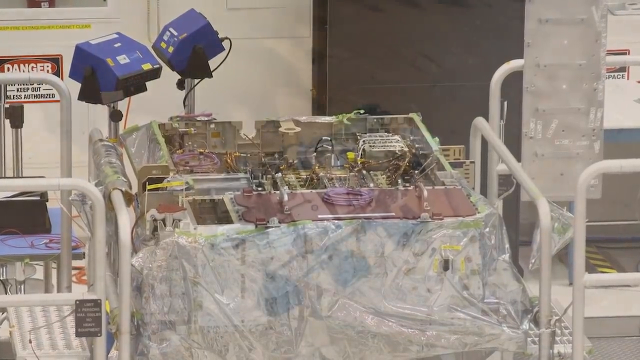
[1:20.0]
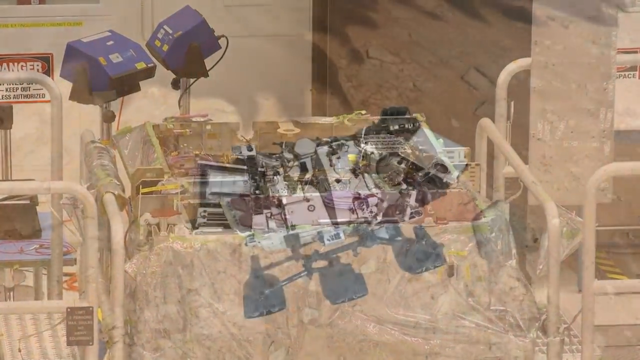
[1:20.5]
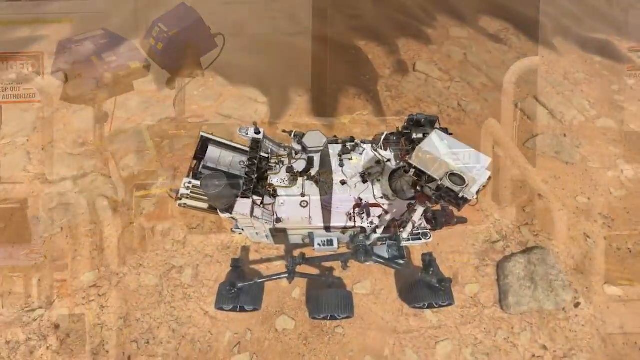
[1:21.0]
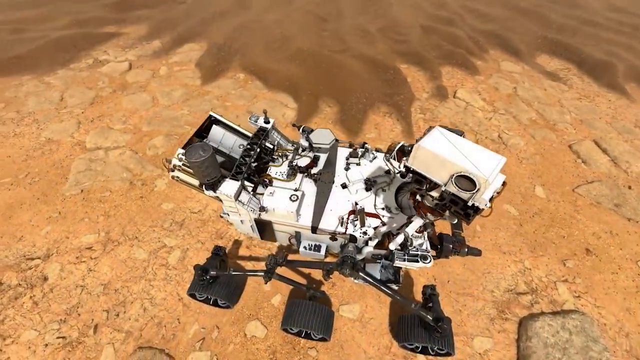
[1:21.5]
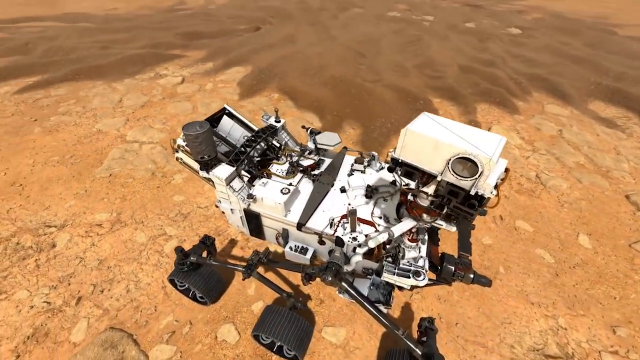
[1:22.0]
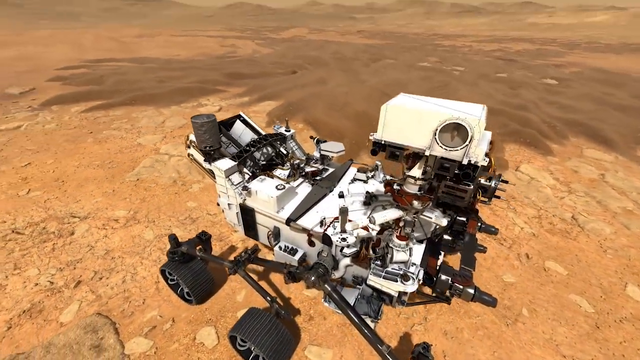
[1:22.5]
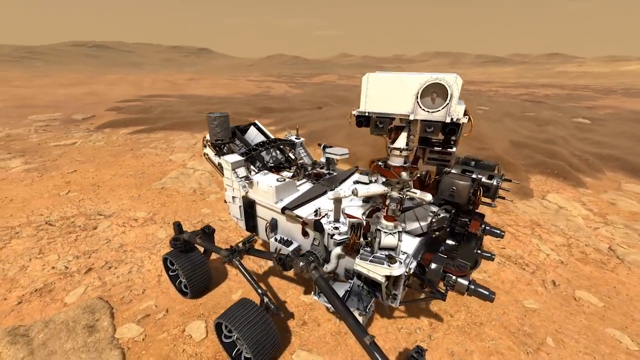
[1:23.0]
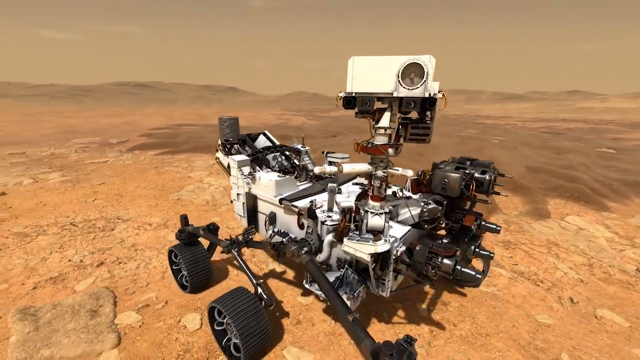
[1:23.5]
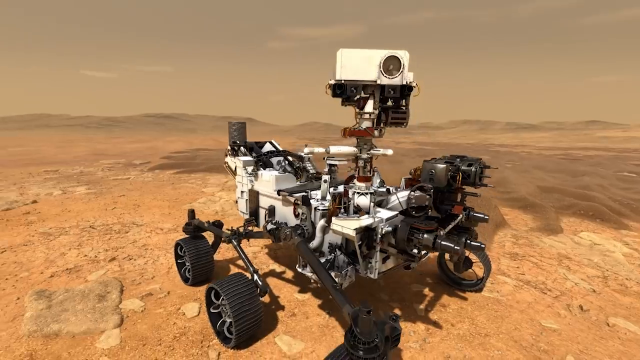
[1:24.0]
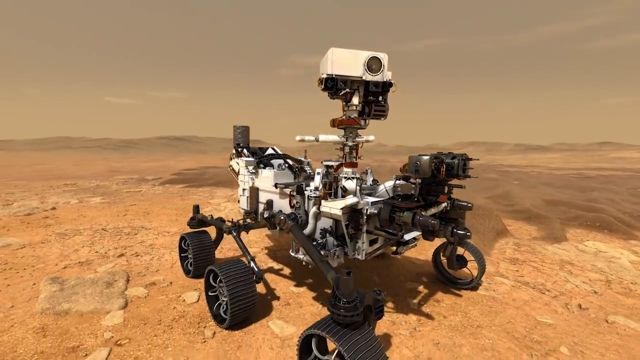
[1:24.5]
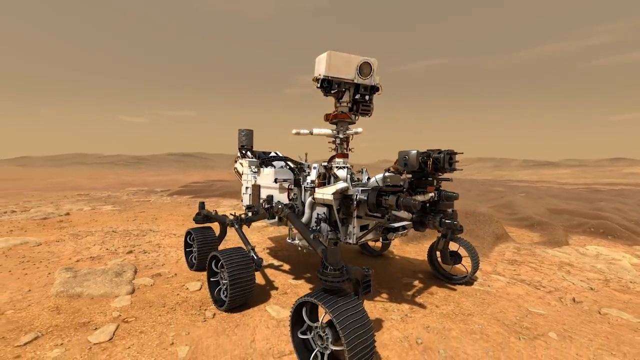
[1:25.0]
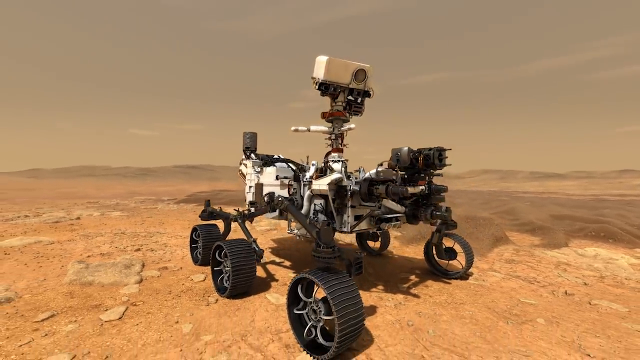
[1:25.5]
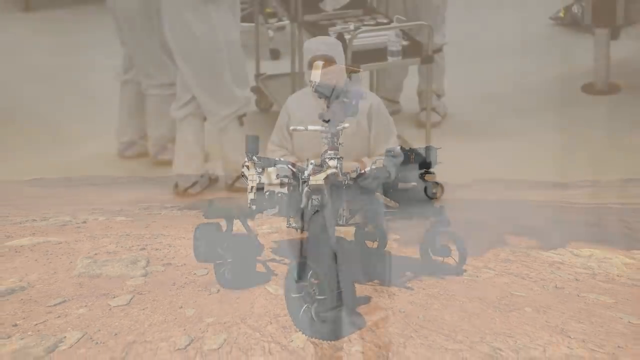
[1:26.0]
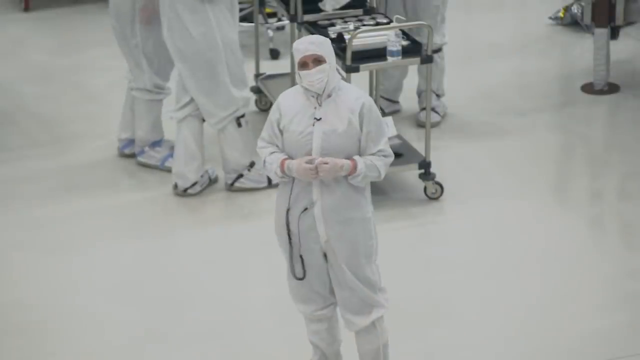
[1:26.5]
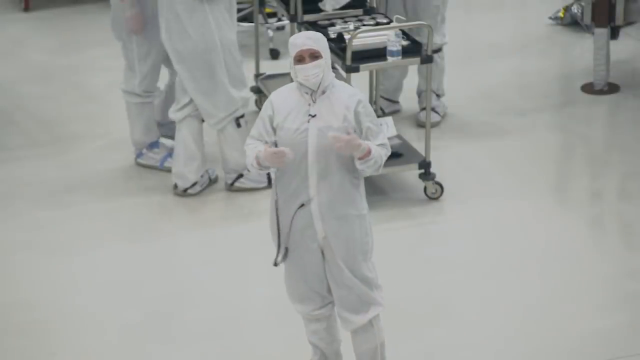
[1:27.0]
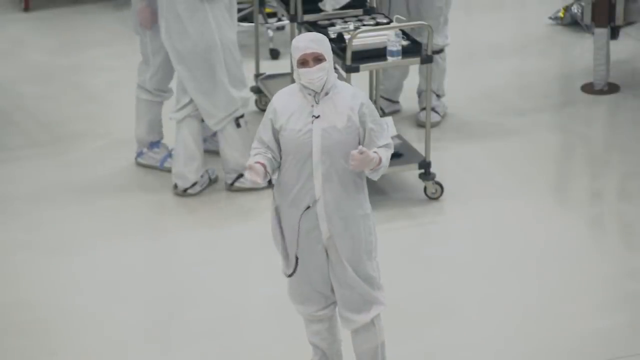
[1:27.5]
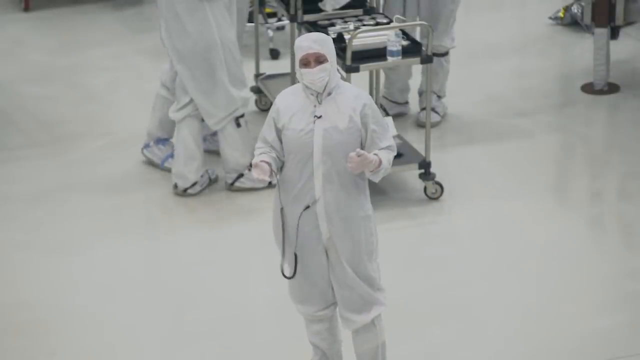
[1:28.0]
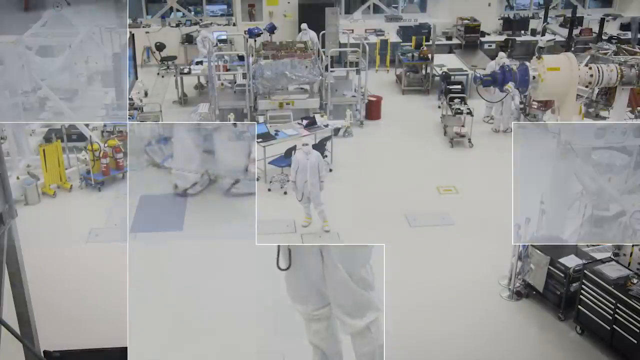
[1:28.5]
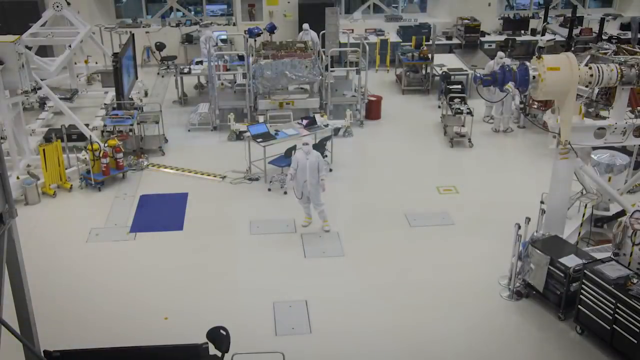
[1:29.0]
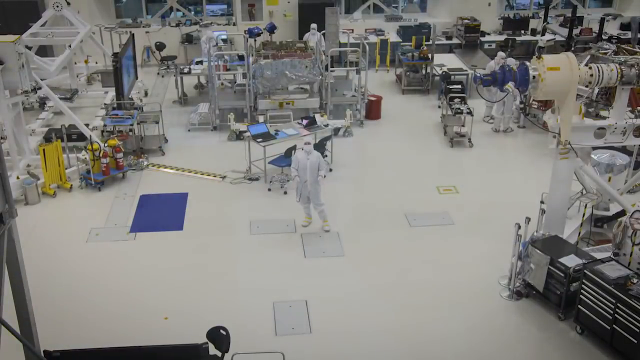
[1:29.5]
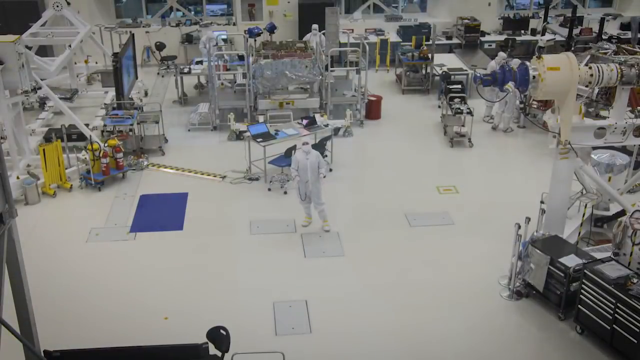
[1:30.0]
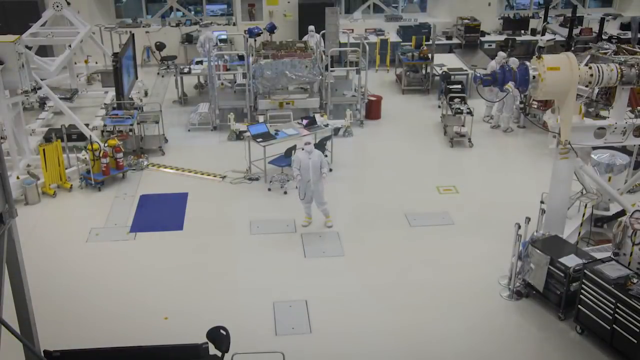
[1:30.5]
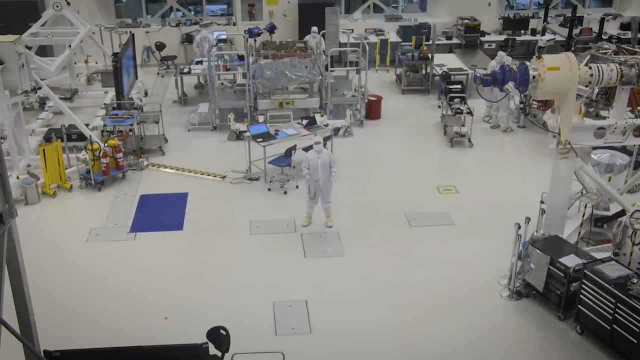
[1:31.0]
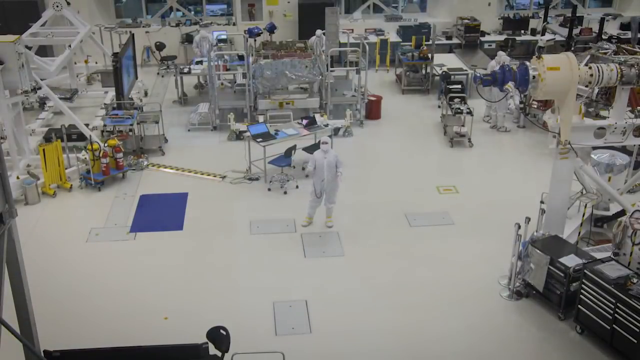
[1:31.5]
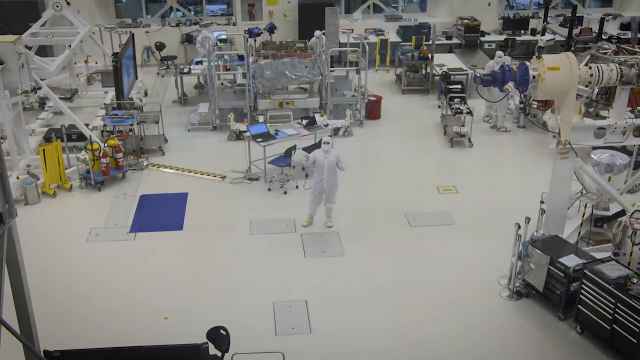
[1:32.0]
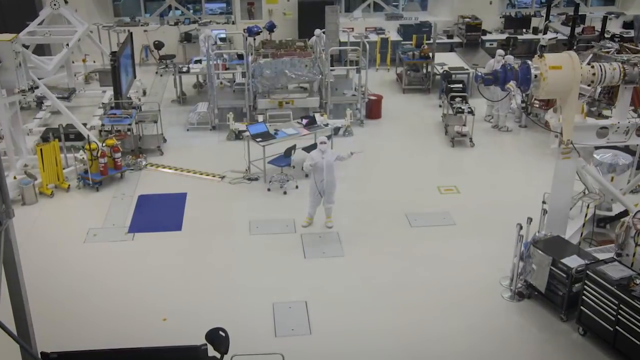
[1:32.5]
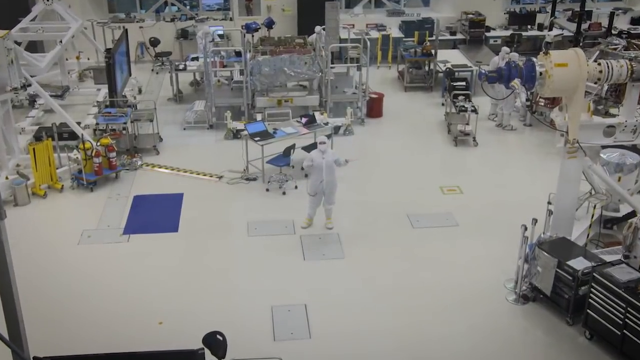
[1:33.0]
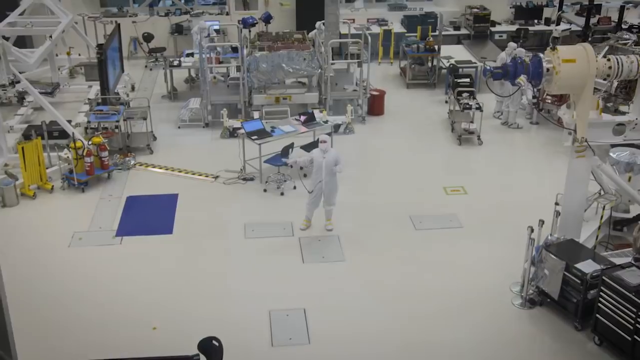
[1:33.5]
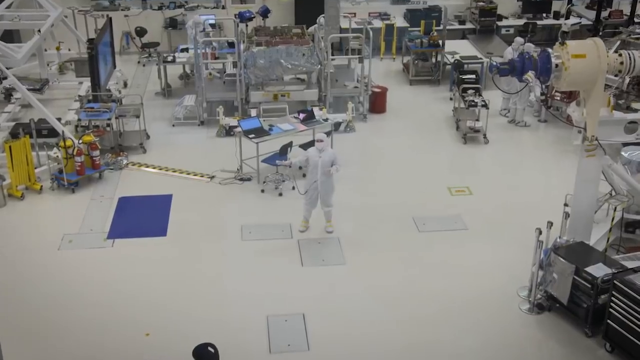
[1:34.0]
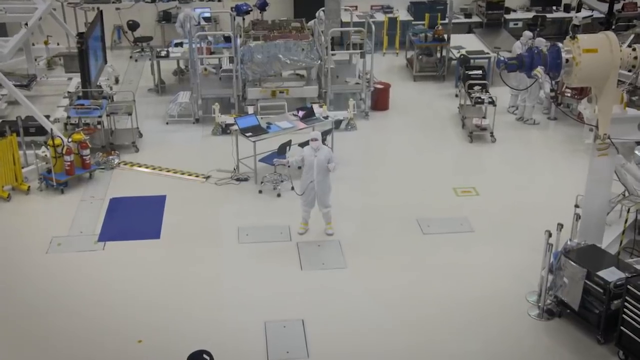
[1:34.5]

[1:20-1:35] A video depiction shows one of the Mars rovers on Mars with all six wheels on the ground and a tripod-type thing sticking up with a camera on top. The woman is still in the middle of the floor area talking, and all around her the other scientists are working on computers and different vehicles.